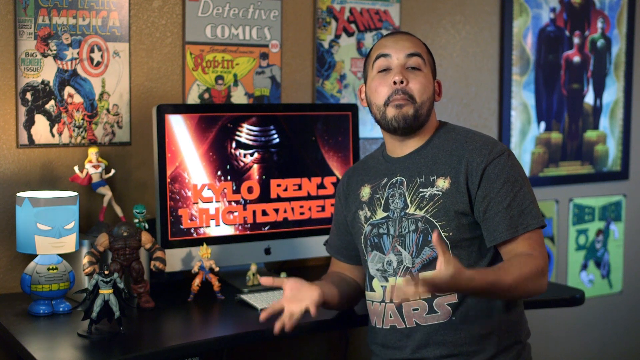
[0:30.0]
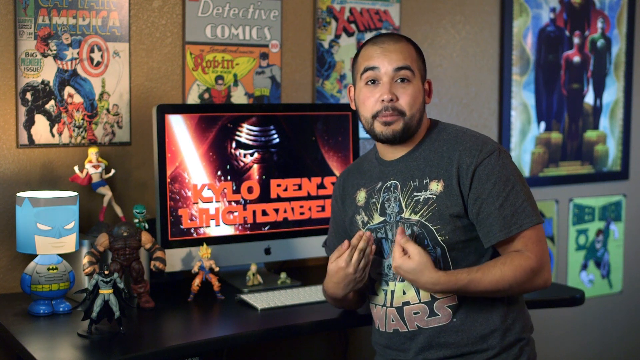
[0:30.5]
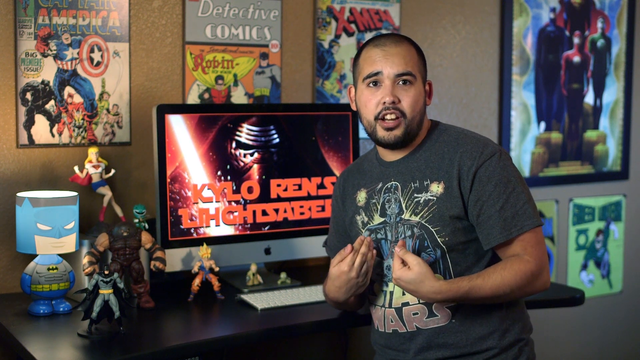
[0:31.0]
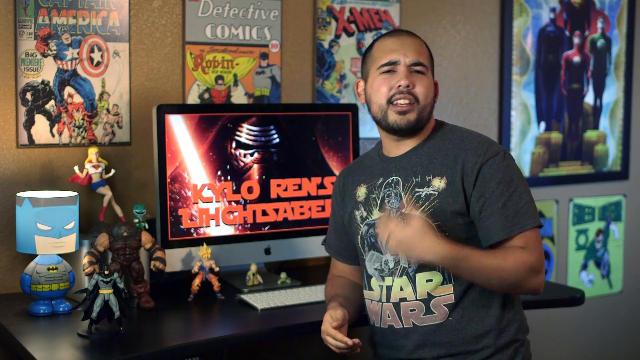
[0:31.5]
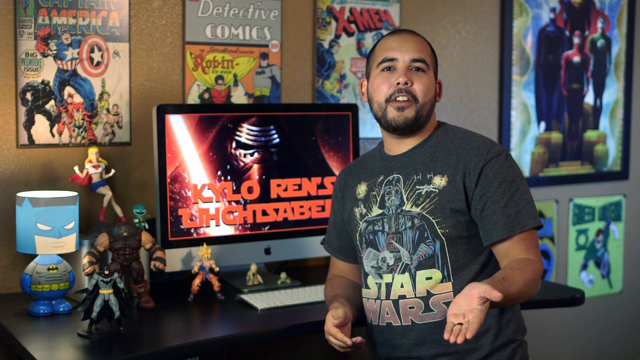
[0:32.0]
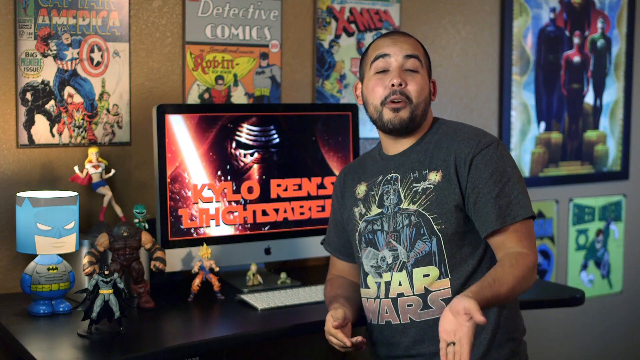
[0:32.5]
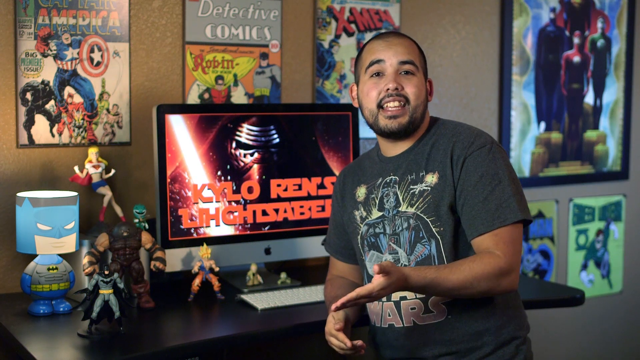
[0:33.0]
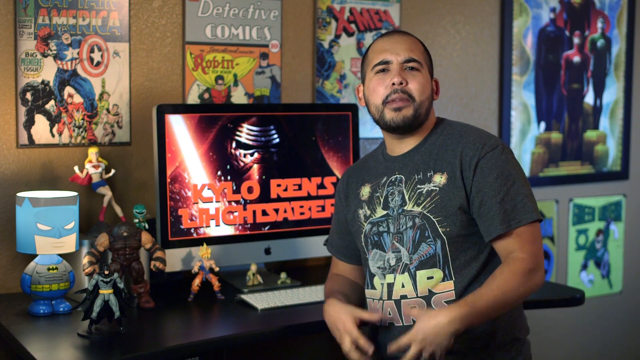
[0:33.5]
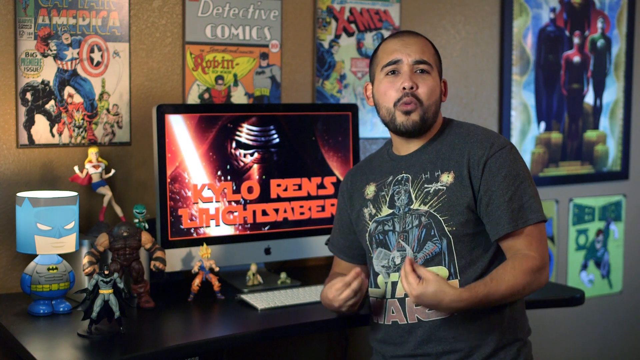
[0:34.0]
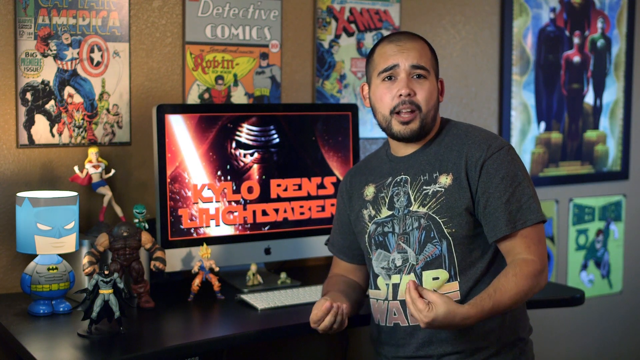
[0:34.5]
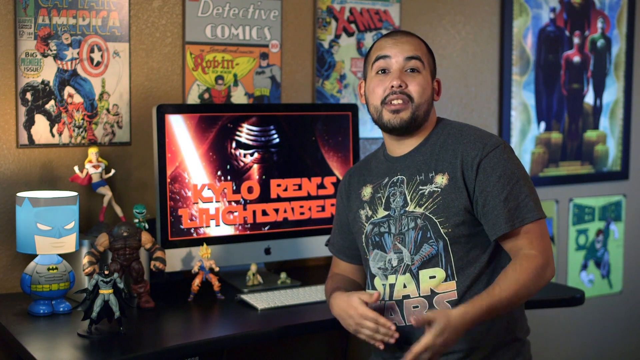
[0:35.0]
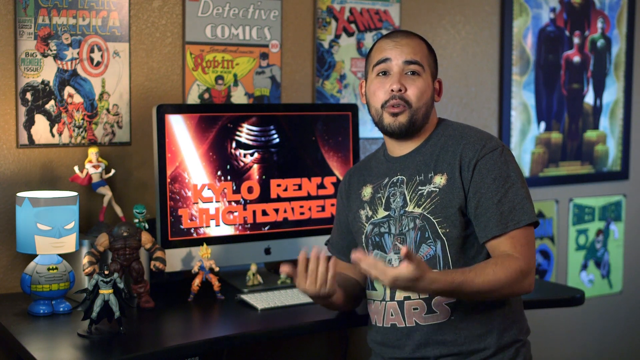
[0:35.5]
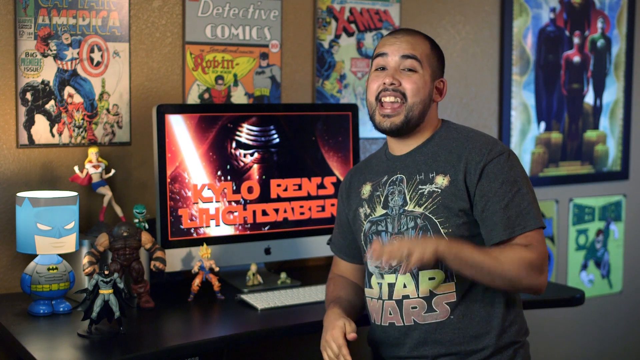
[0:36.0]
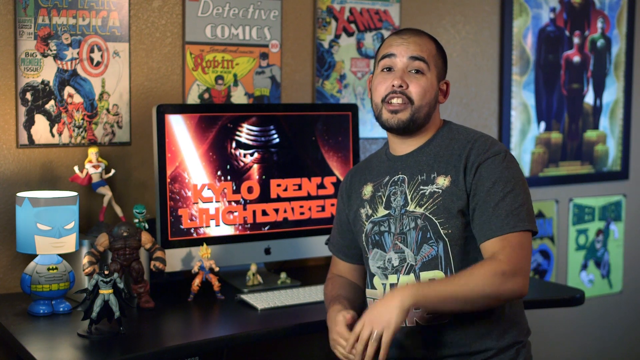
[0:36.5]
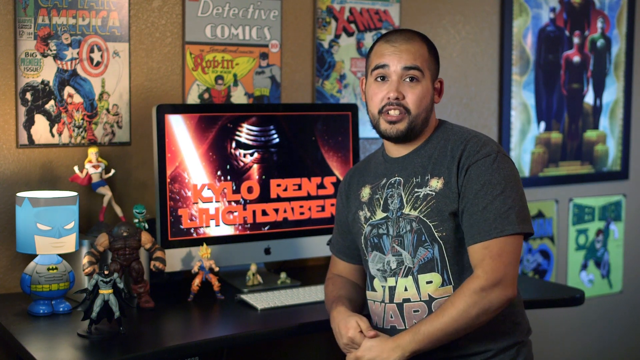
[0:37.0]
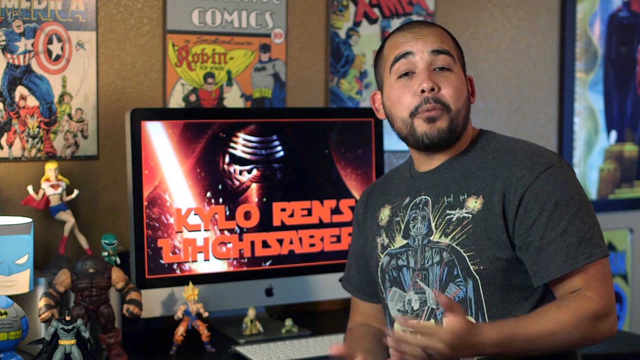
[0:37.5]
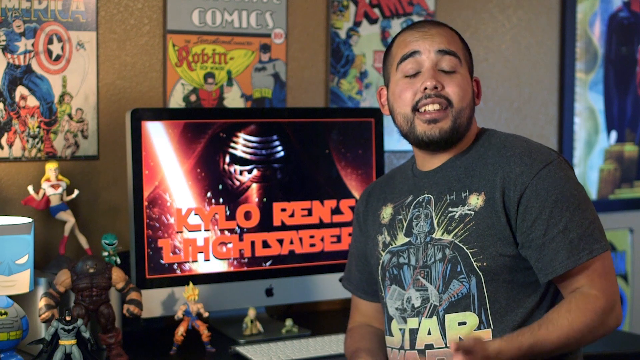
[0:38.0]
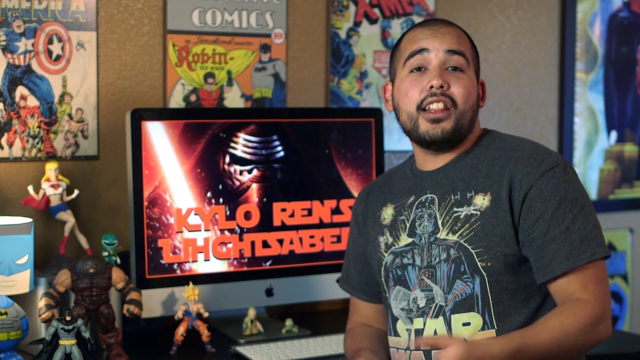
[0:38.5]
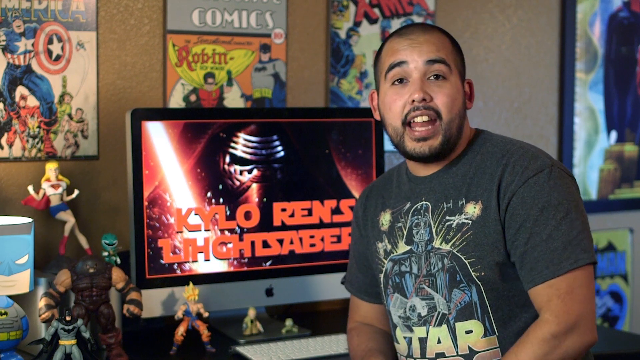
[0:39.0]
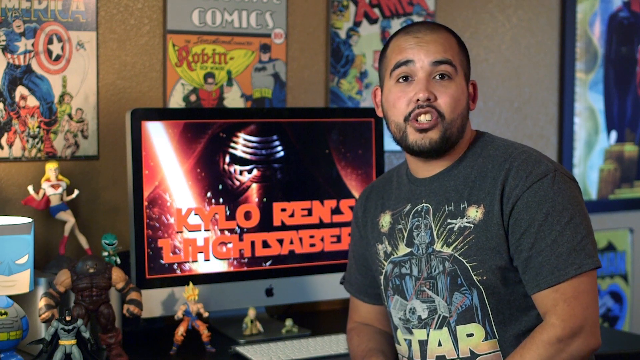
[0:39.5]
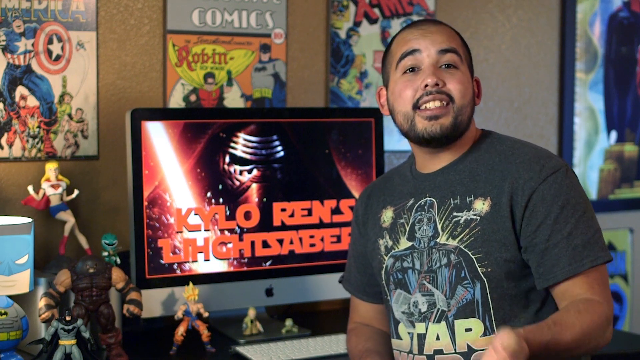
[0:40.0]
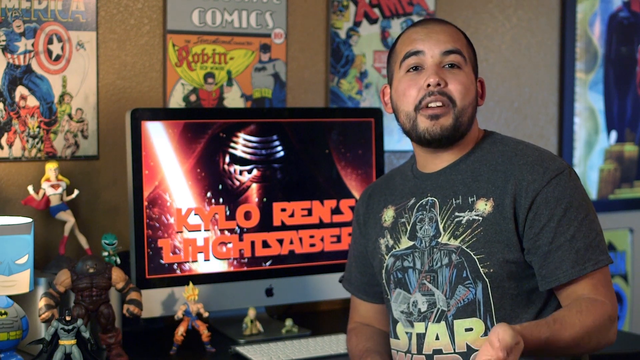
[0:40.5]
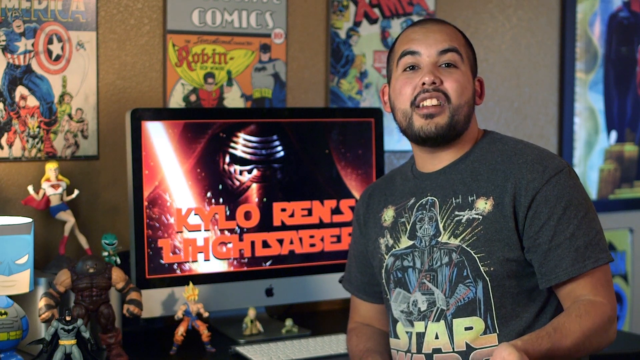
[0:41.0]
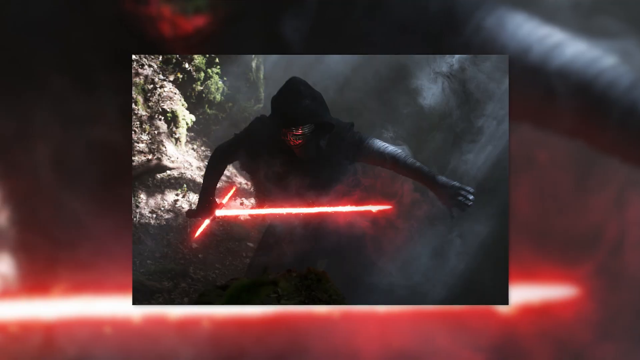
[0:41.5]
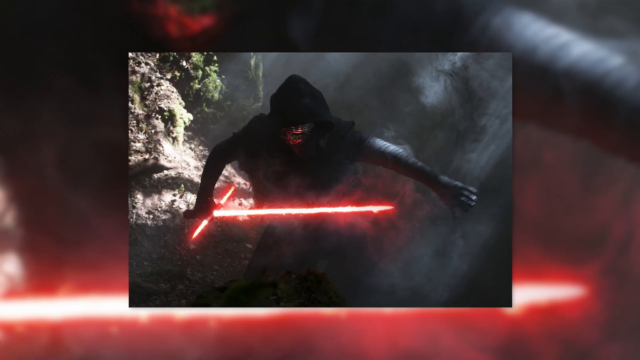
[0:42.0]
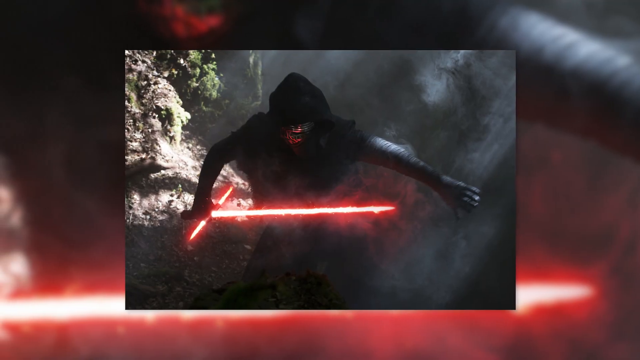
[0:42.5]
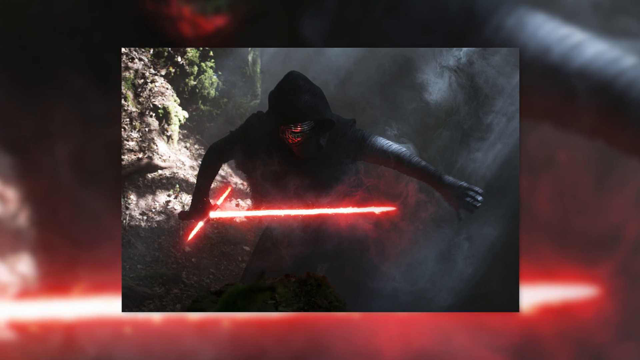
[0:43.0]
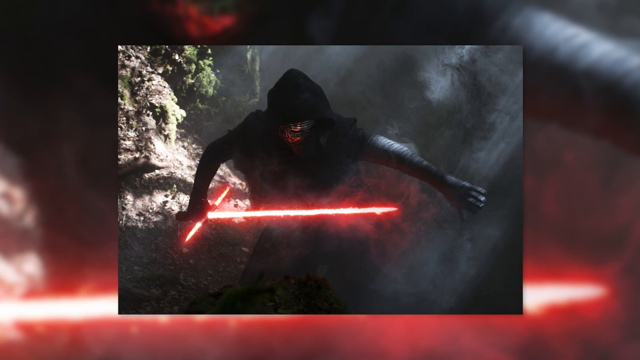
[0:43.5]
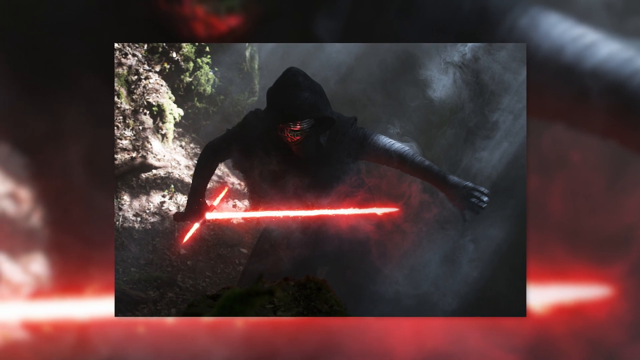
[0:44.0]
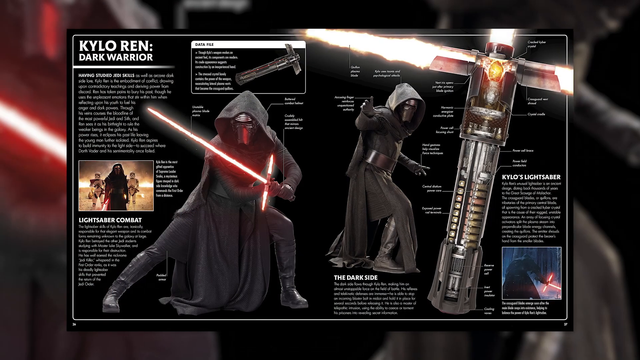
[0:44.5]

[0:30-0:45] The YouTube video was uploaded by Variant Comics, whose banner is in the top left of the image: a blue-filled circular background with a blue shield outlined in white and a V in the center. It is titled "How Kylo Ren's Lightsaber Works." The main image is a close-up of Kylo Ren in mask and hood with his red lightsaber glowing, with red text over him reading "Kylo Ren's Lightsaber." A narrating man with brown skin and short black hair wears a black Darth Vader shirt that says Star Wars in gold lettering. He appears to be in an office space with his computer behind him; its screen shows the opening image of the video, repeating "How Kylo Ren's Lightsaber Works." The space has tan walls with blown-up, framed comic book images. Interspersed with the gesturing man are clips from a Star Wars film featuring a dark, hooded Kylo Ren, along with pages from a Star Wars encyclopedia. A transparent white Variant Comics watermark, the same shield but see-through, is in the bottom right of the image.